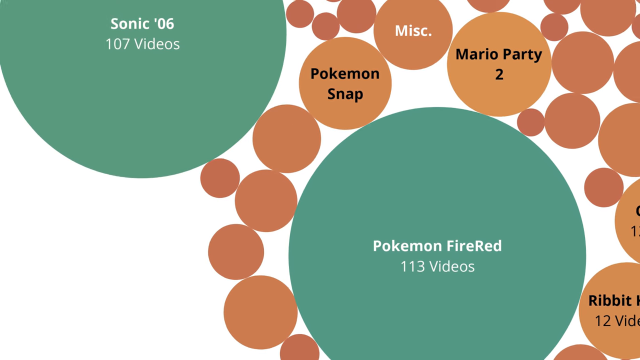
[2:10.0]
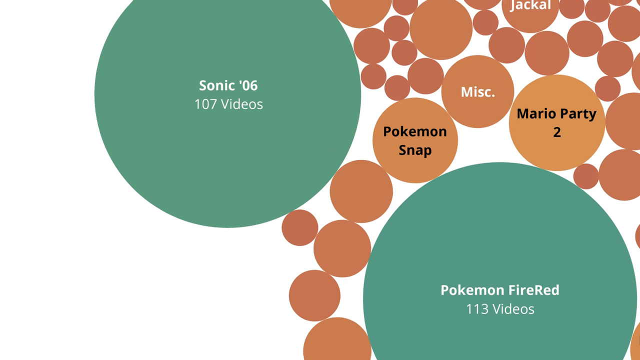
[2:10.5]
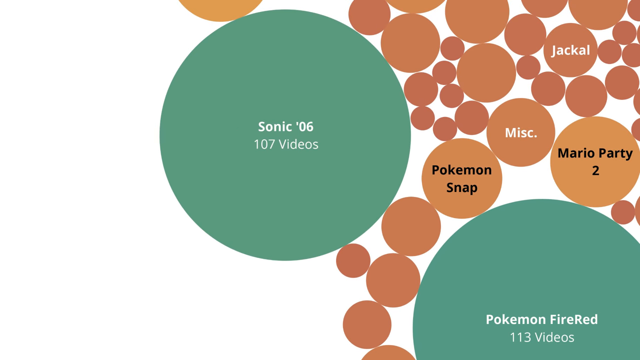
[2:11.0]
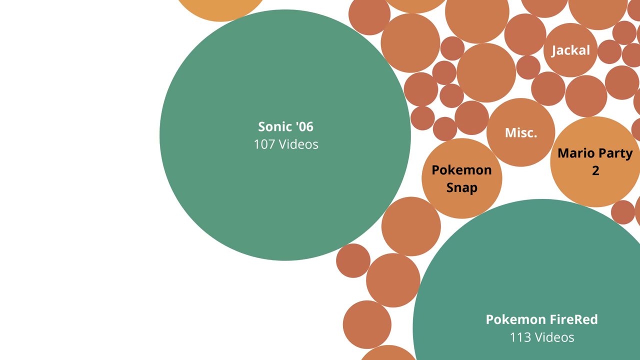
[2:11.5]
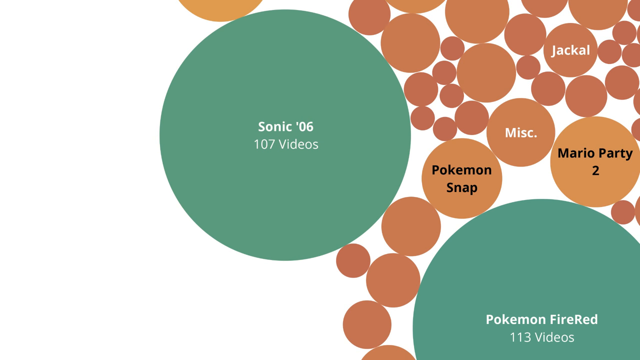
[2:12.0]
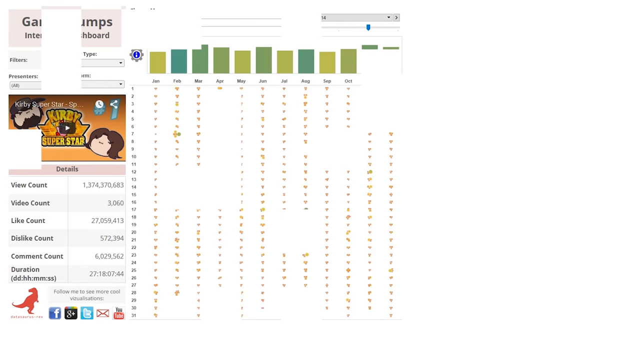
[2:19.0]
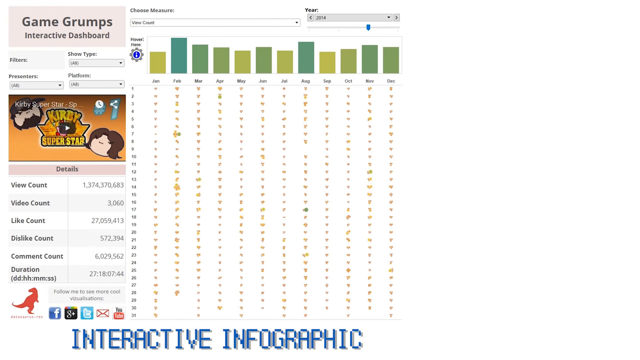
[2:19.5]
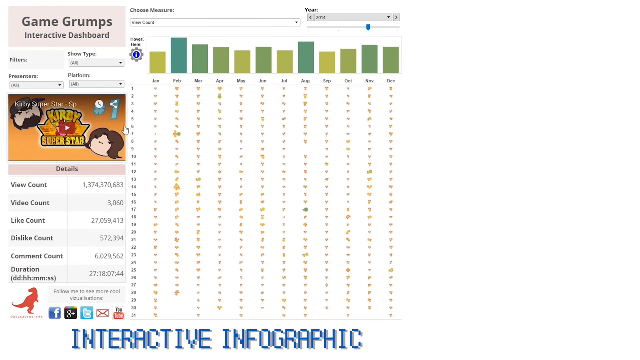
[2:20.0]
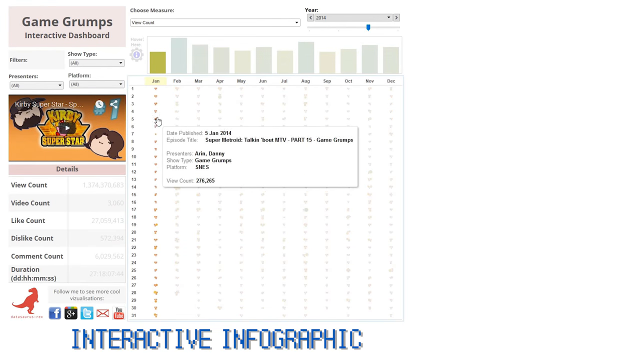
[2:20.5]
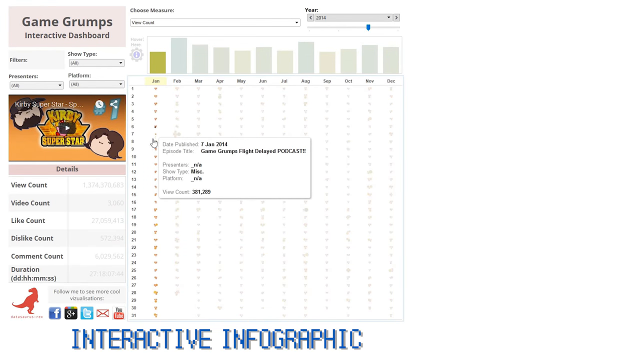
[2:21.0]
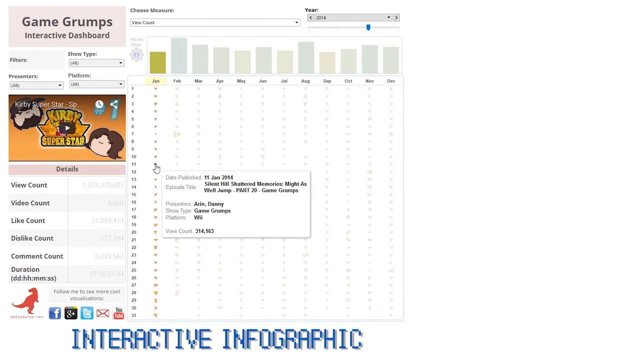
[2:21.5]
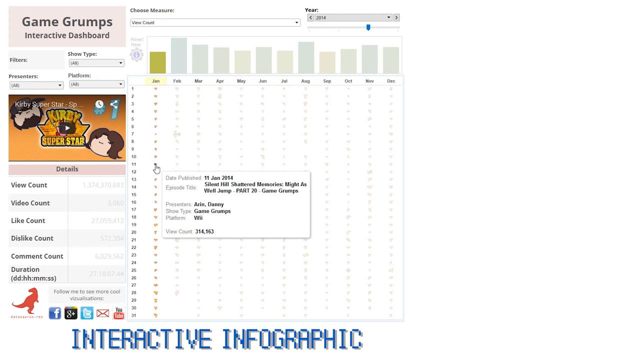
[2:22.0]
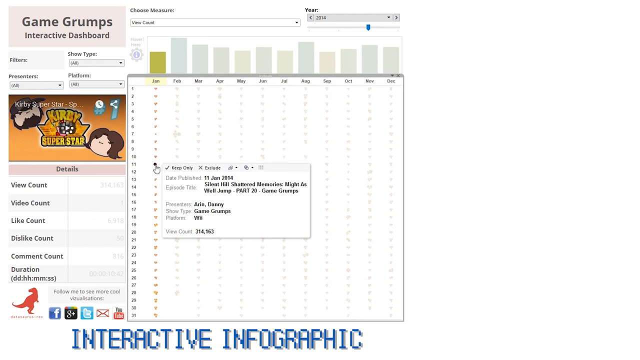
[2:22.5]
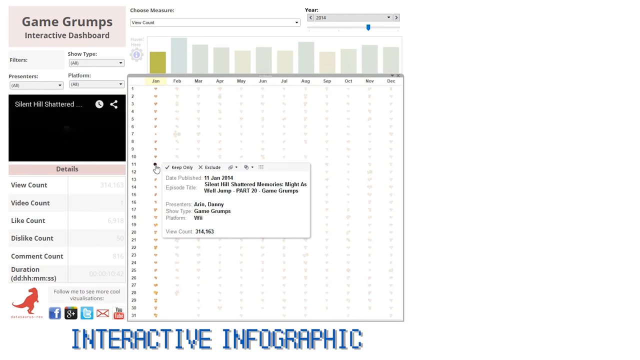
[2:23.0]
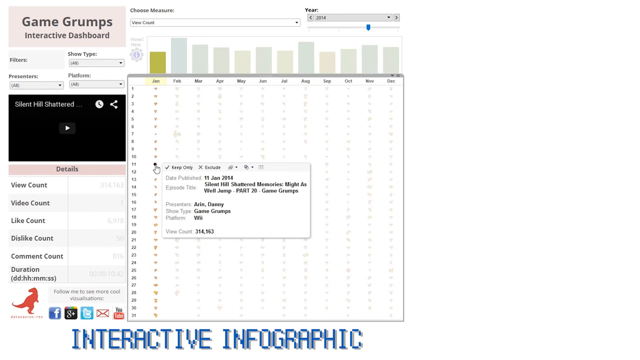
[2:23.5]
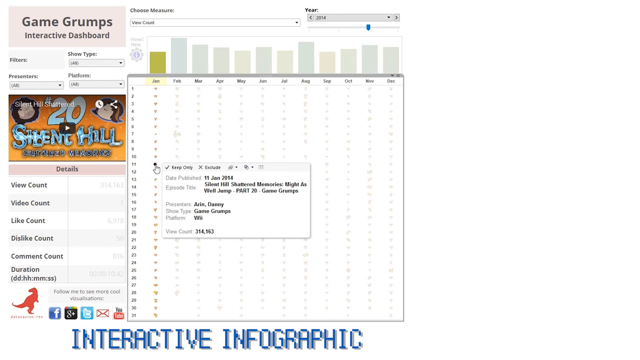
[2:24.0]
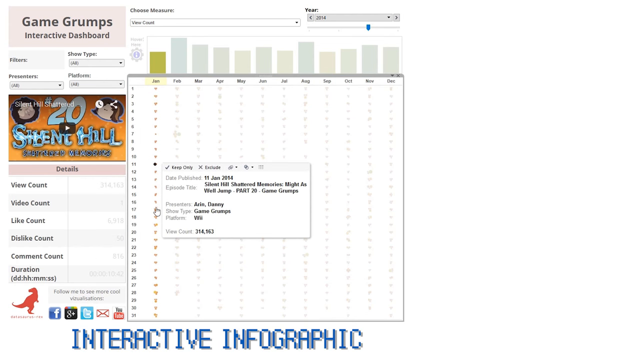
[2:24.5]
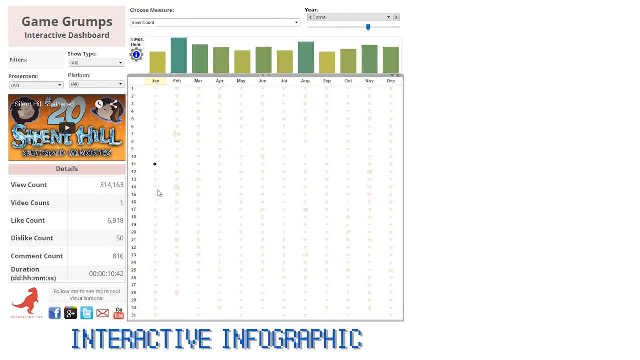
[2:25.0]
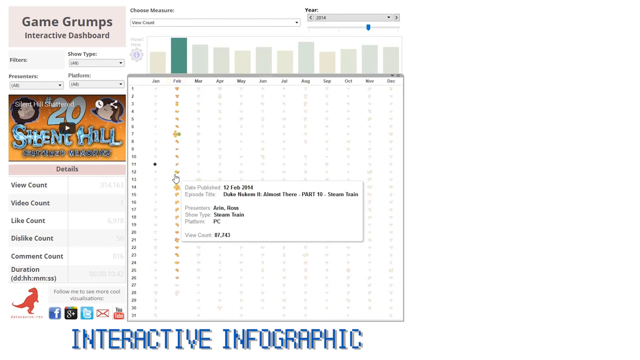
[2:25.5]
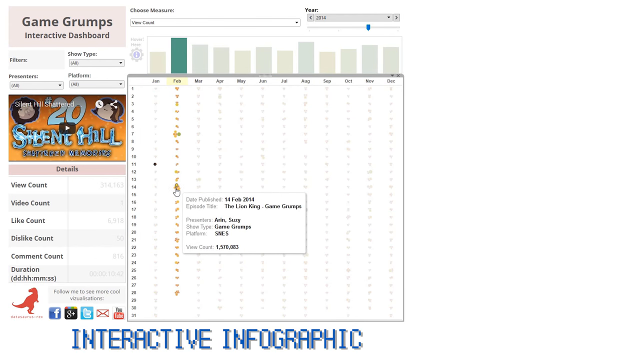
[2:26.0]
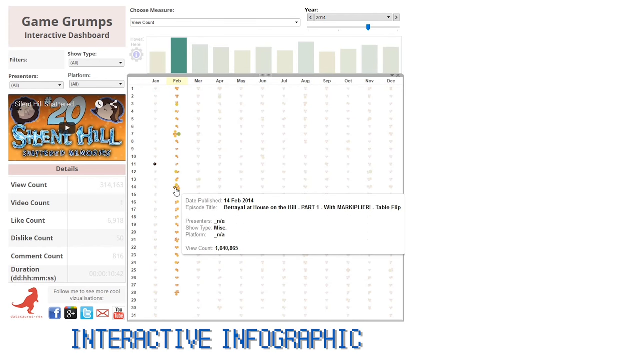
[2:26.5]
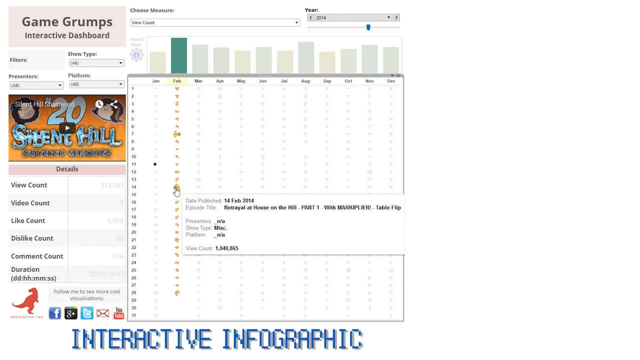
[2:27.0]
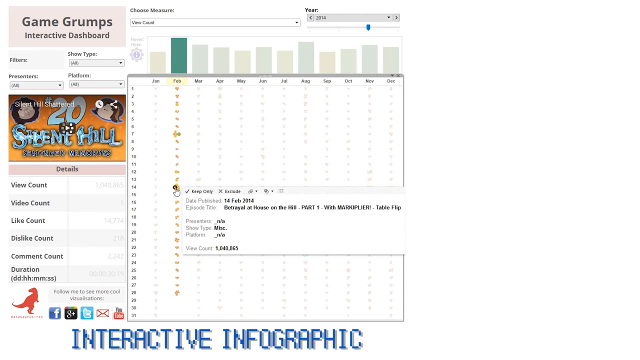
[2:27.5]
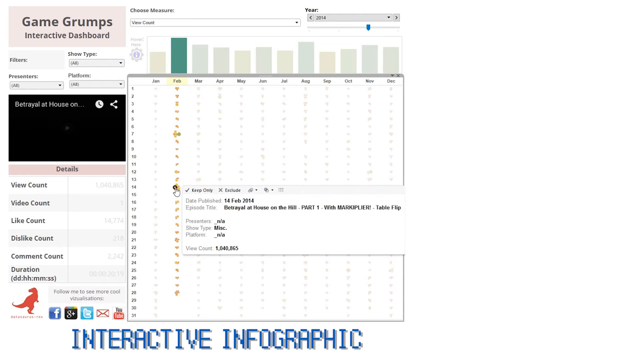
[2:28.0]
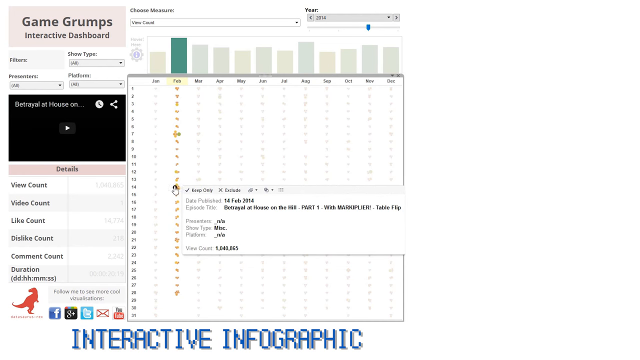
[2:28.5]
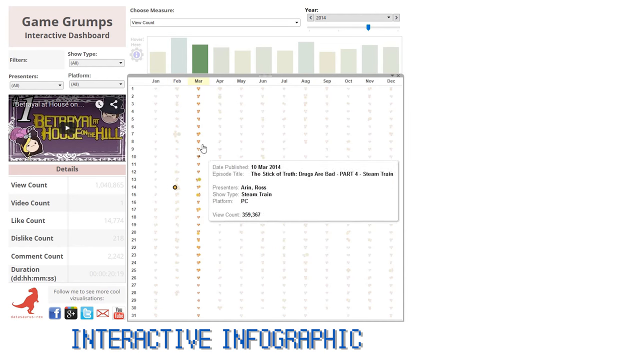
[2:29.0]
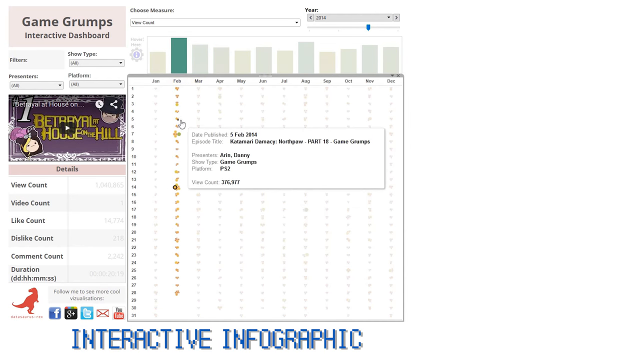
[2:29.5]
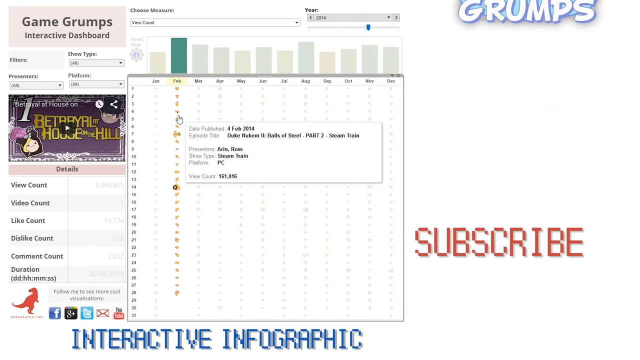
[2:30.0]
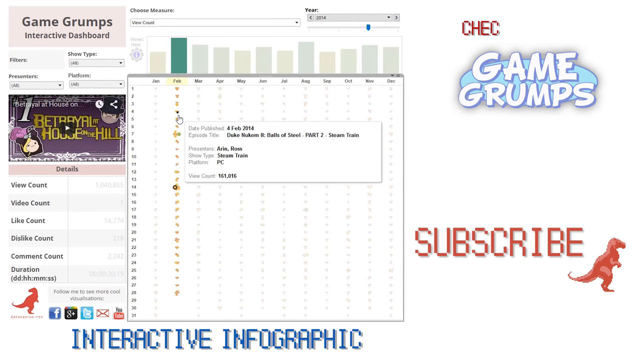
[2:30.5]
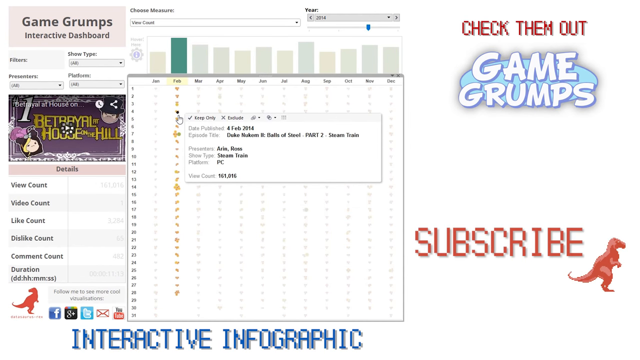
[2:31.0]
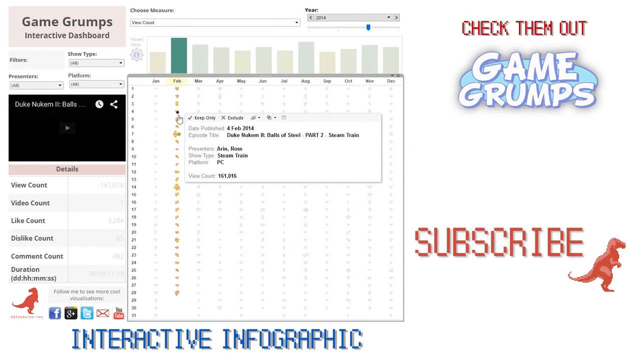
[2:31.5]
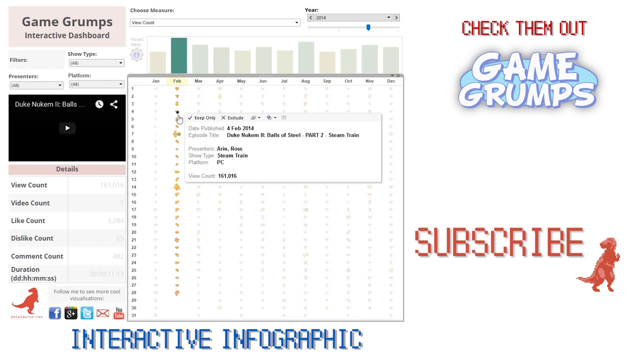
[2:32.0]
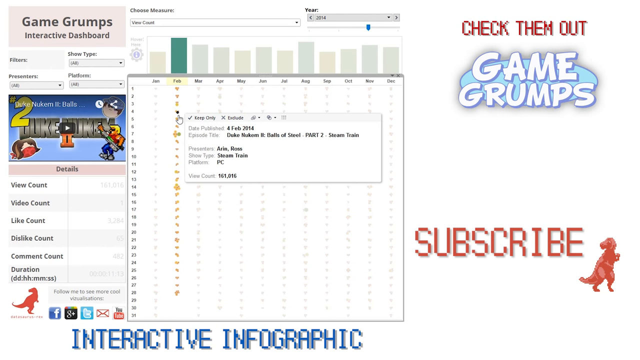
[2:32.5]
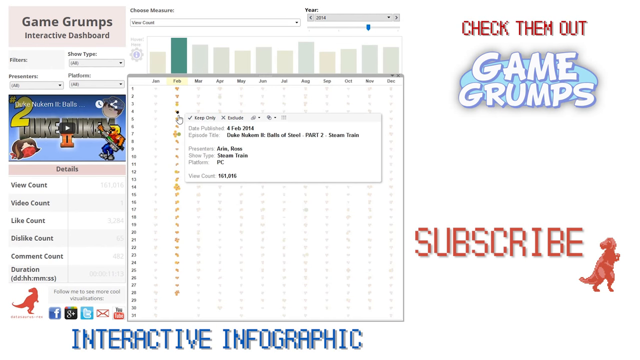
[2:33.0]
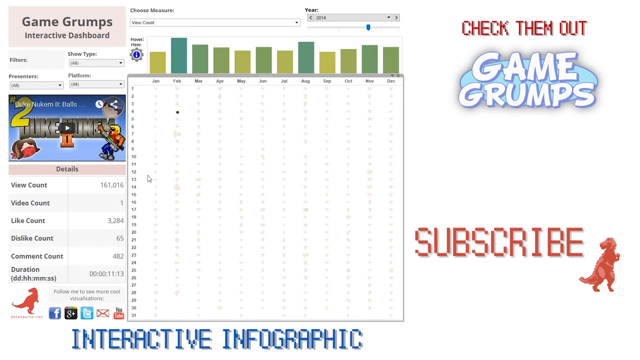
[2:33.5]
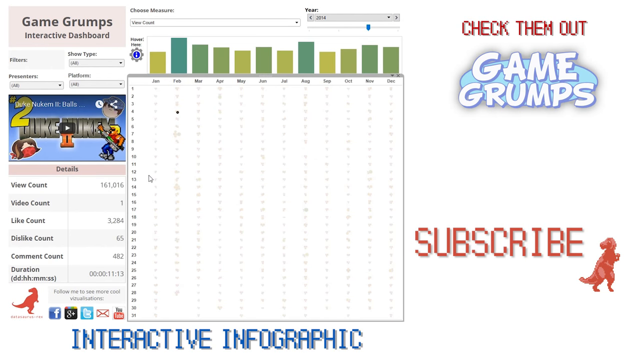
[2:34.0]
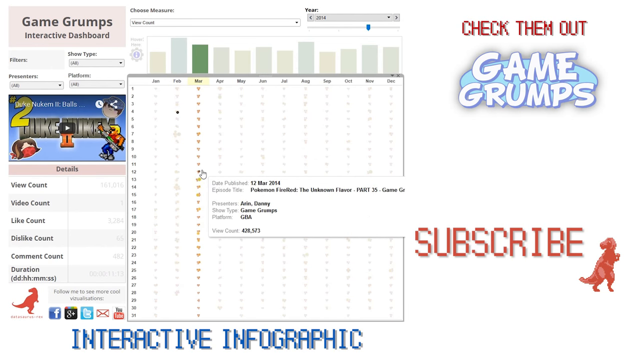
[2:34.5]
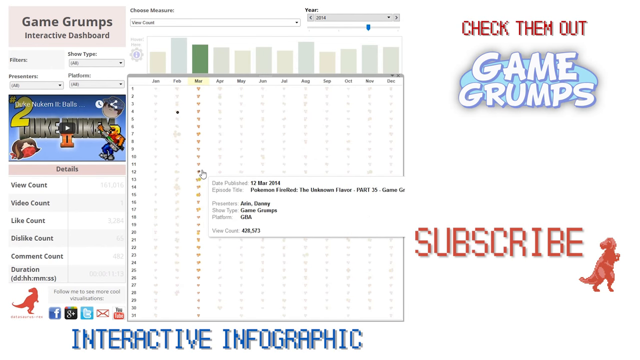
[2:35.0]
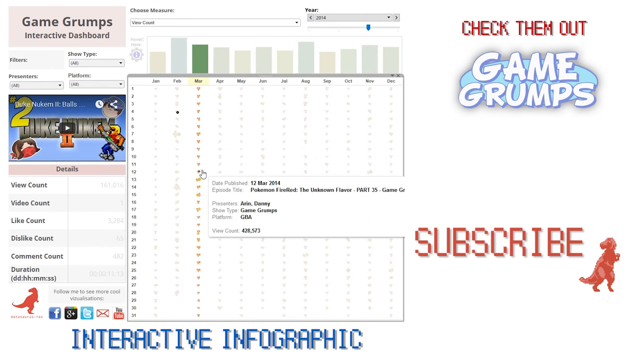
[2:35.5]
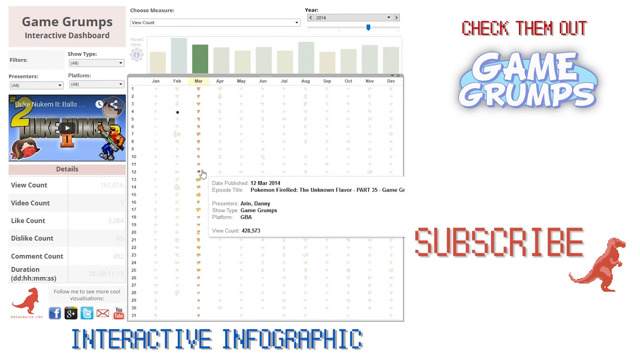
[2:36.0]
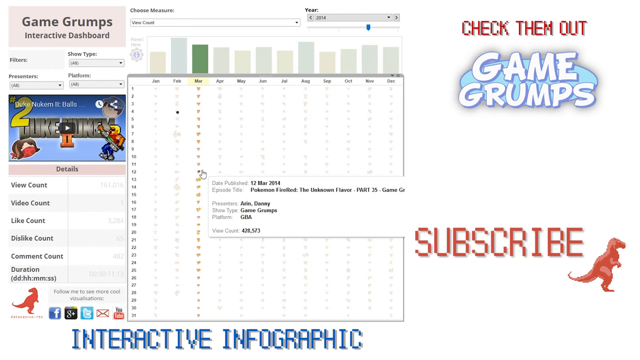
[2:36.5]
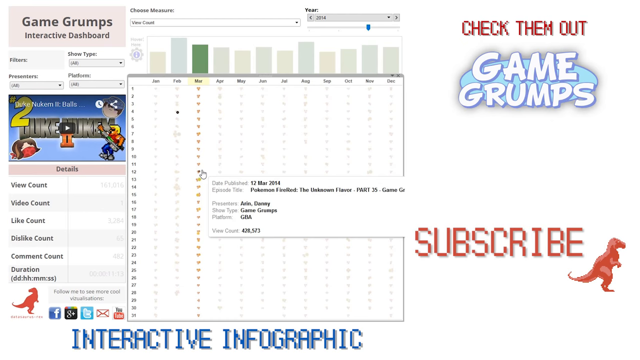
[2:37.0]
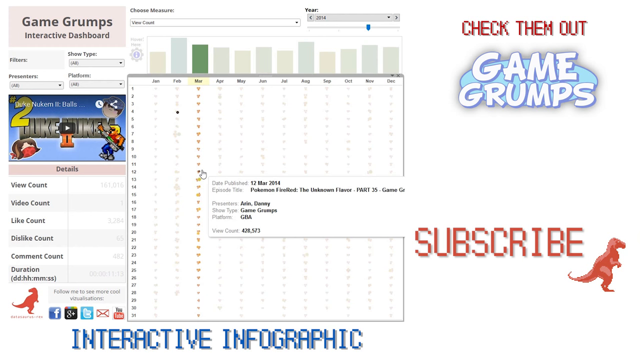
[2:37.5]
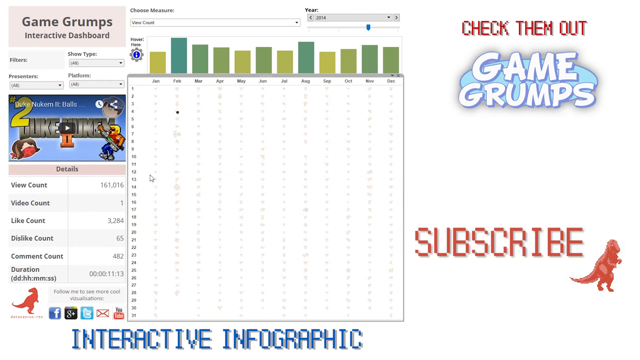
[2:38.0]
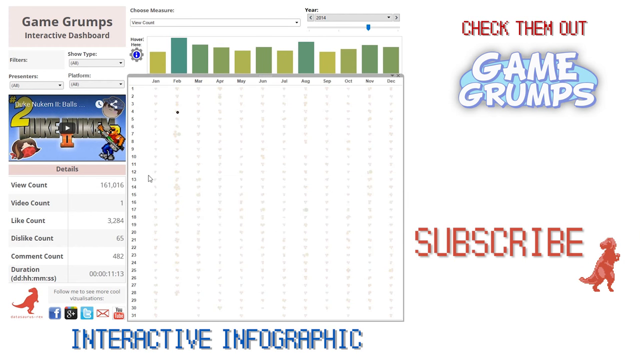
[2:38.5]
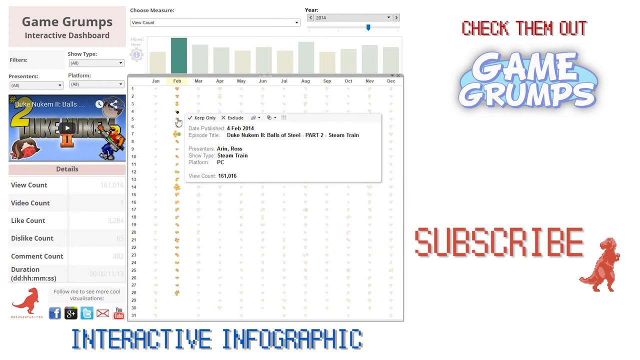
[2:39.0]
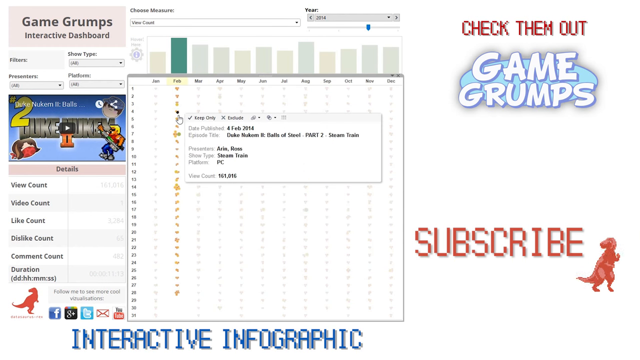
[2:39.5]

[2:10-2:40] What appear to be circles and blobs are shown. The first, very large one shows "Sonic 06, 107 videos," and the second largest is "Pokemon Fire Red" at 113 videos, followed by orange circles. Three more circles are legible: an orange circle with black text reading "Pokemon Snap," an orange circle with the white word miscellaneous abbreviated to "MISC," and an orange circle with black text reading "Mario Part 2." The view shifts up to an orange circle with white text stating "Jackal." An all-white screen then shows an interactive infographic with several catalogs and information such as view count, partners, and the months. On the far right it says "Chippin' Out" in red, "Game Grumps," and "subscribe" with the red T-Rex. There appears to be a mouse hovering all around the months and the catalogs within the display.